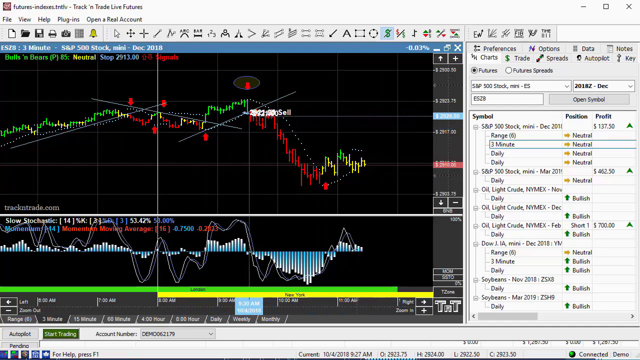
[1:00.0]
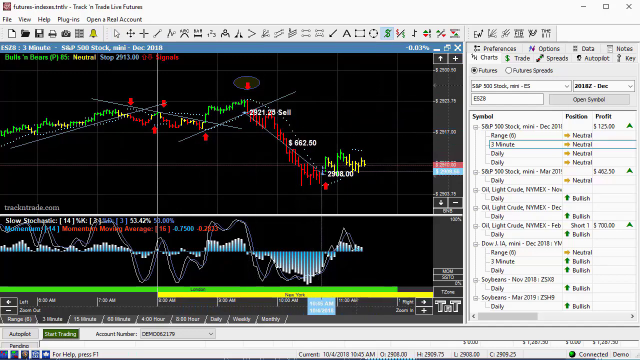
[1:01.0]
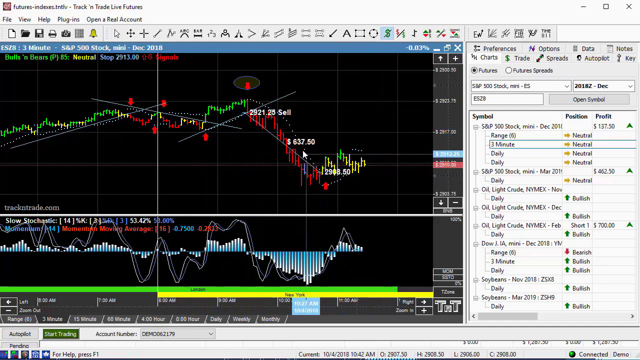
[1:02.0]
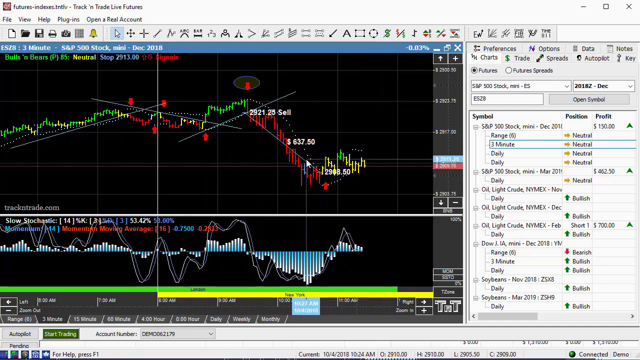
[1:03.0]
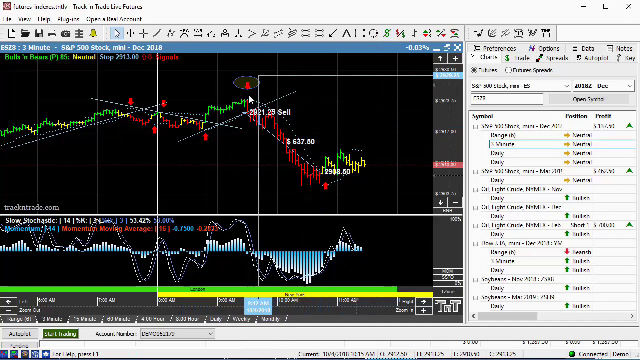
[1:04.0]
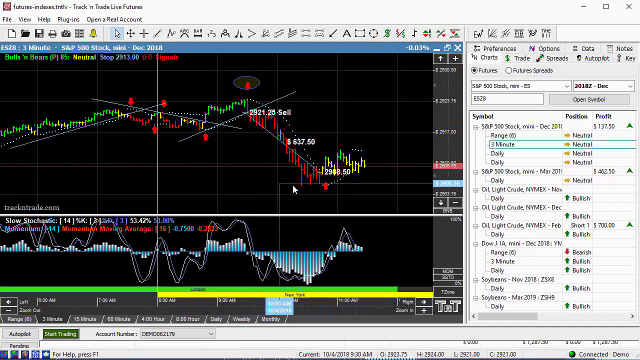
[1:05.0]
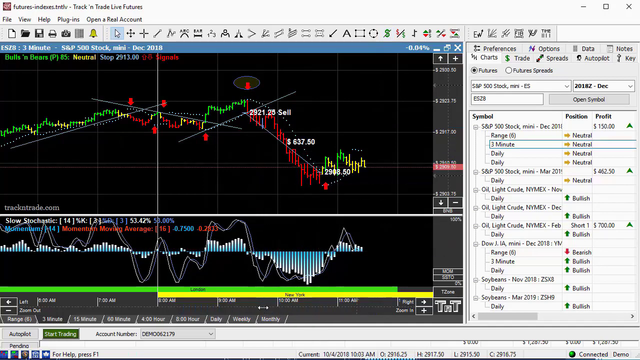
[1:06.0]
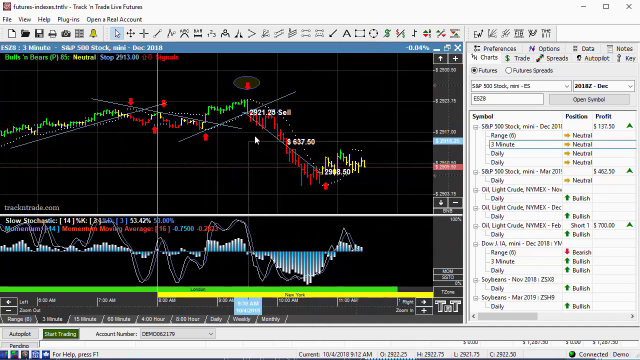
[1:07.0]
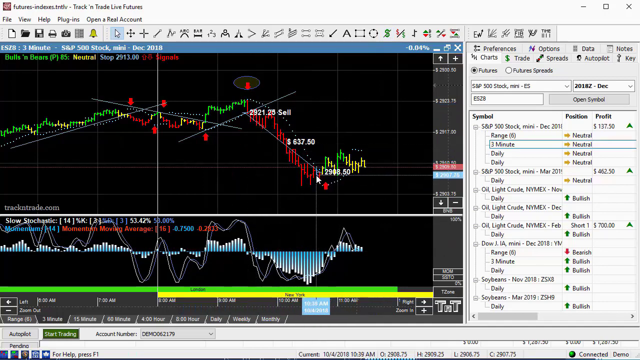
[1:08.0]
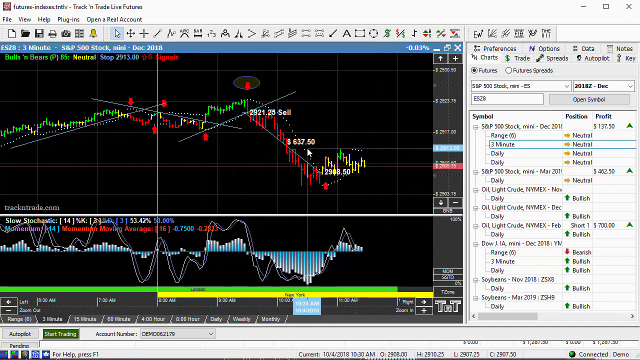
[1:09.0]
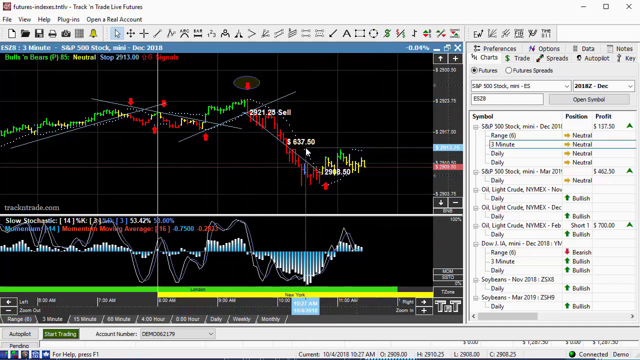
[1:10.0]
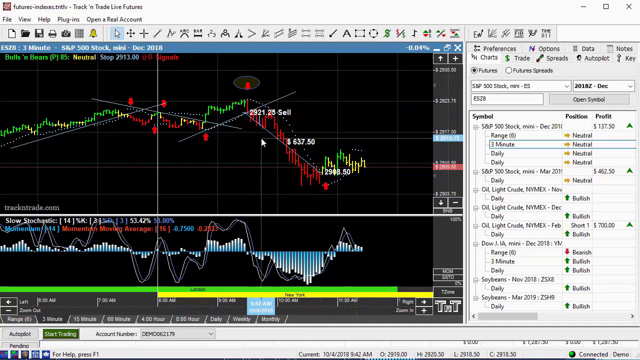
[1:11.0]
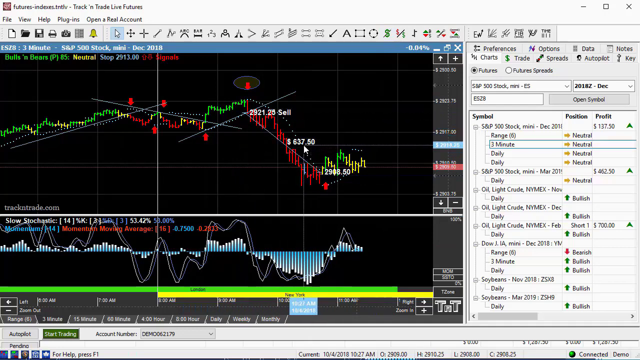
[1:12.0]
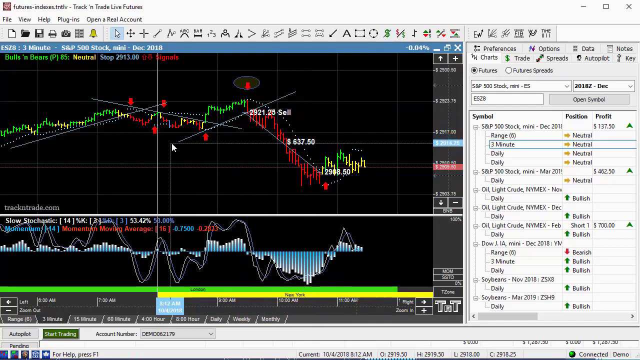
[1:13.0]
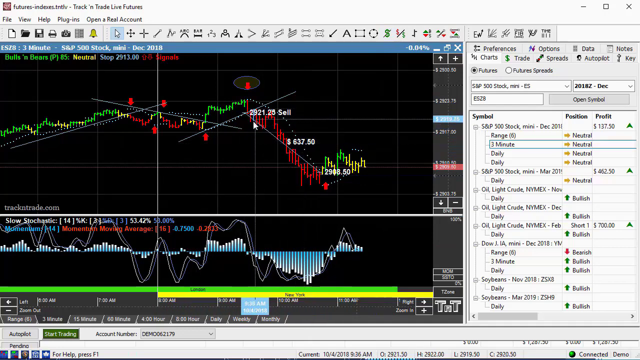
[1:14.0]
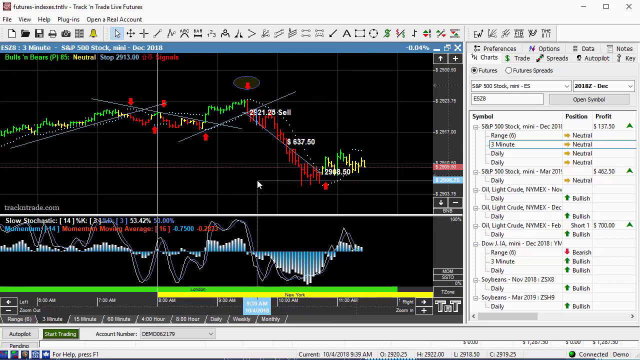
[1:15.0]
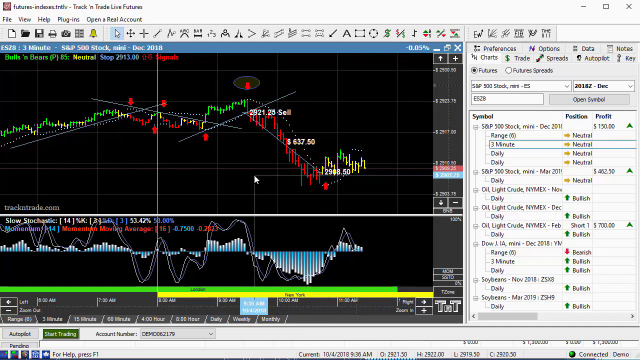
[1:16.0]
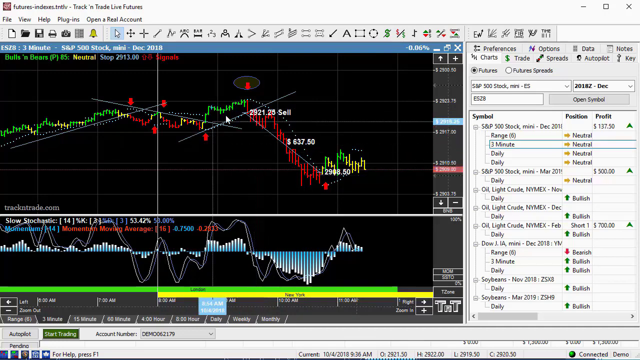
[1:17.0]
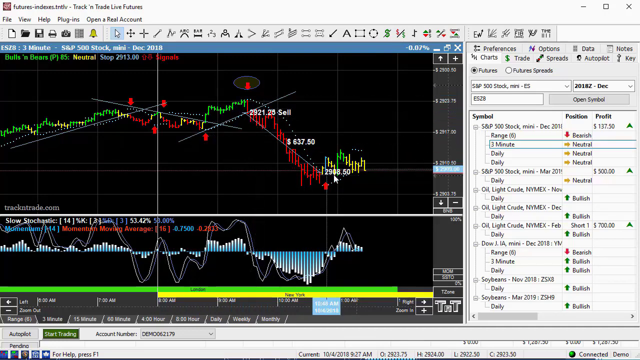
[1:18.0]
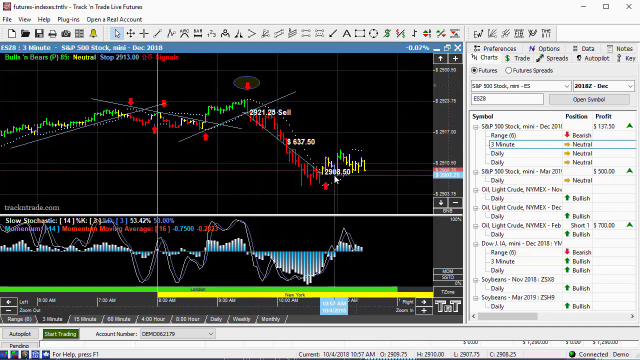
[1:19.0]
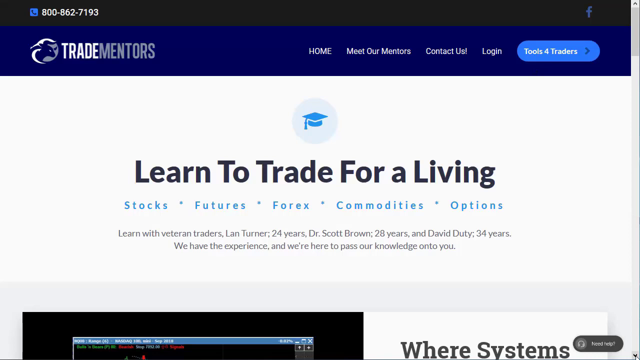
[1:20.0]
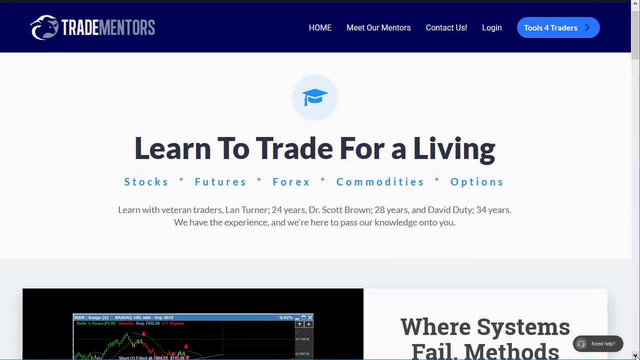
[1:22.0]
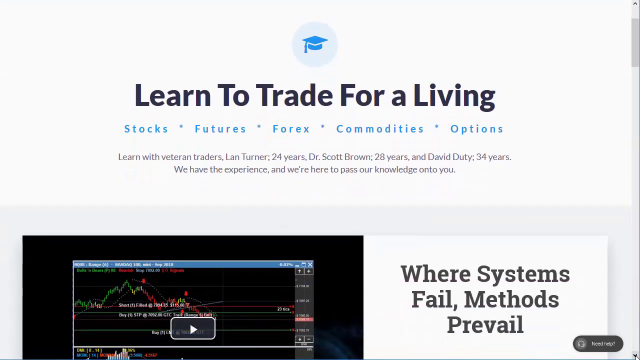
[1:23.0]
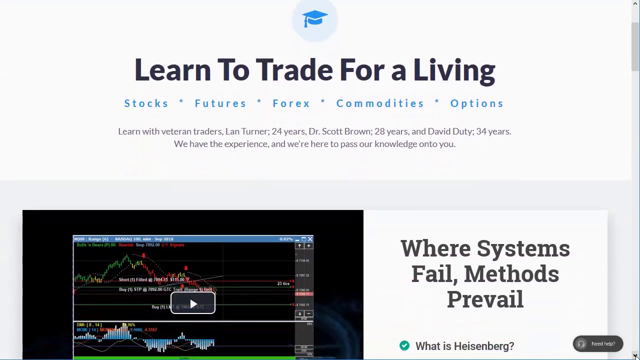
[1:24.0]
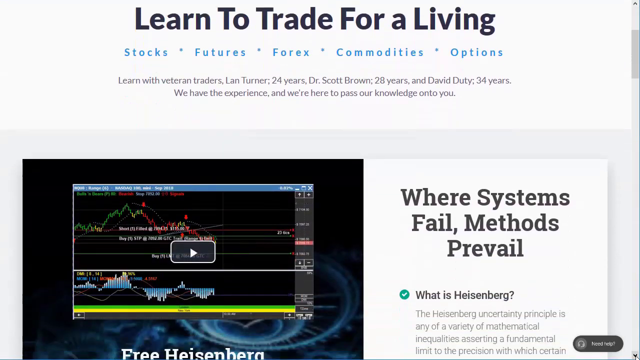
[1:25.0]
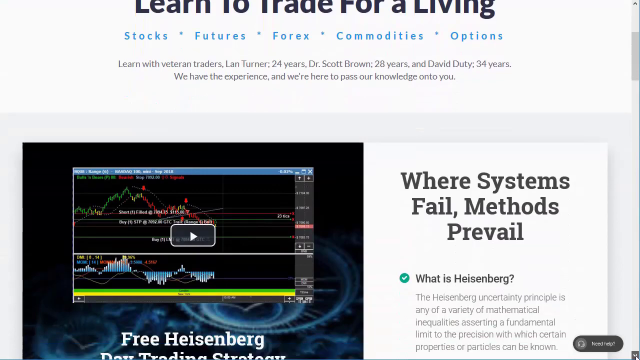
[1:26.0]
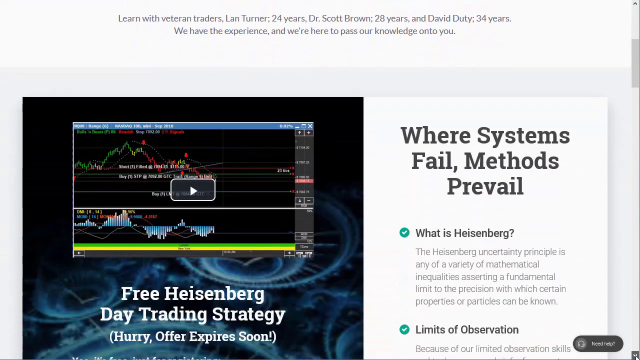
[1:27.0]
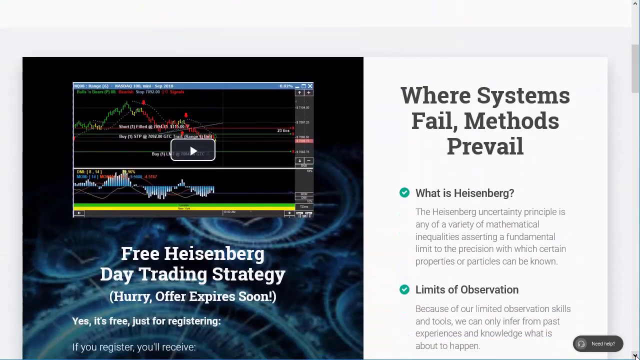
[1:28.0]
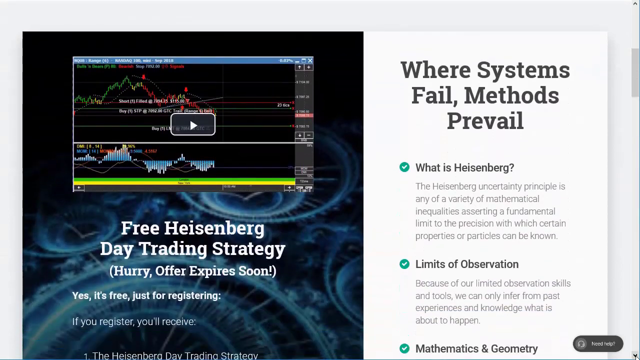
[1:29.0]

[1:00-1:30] A graphical representation of a data set shows two different graphs at the same time, one above the horizontal axis and one below it. The graph below the axis is blue, and the one above is green, red, and yellow, showing trends. At the very top are the words File, View, Help, Plugins, and Open a Real Account, with icons below such as a printer, a save icon, a camera, and a notification or bell icon. To the right are different shapes with different lines. The cursor moves along the graph, up, down, and to the side, and numbers appear on the upper graph, such as a value of "$637.50". The view is then directed to a website.